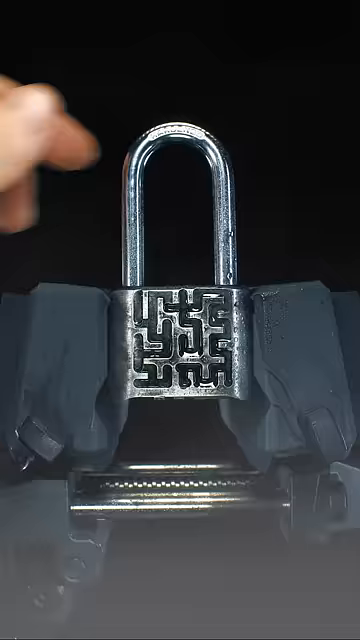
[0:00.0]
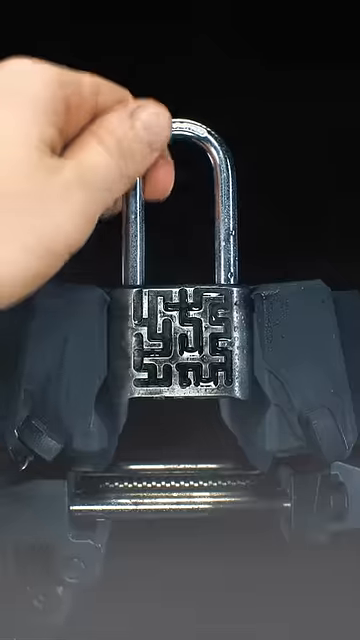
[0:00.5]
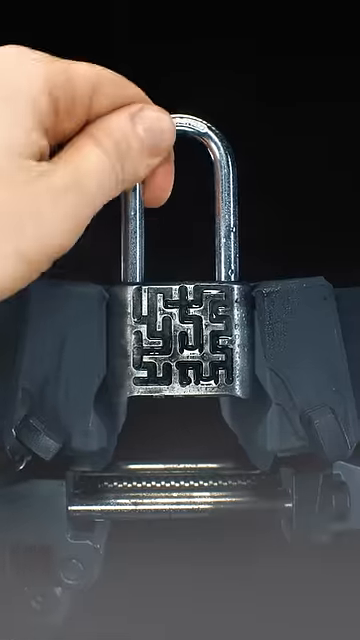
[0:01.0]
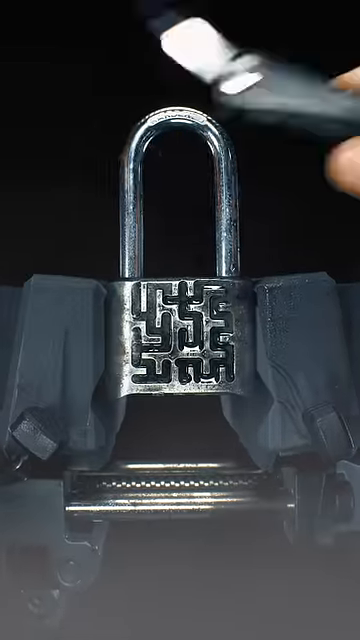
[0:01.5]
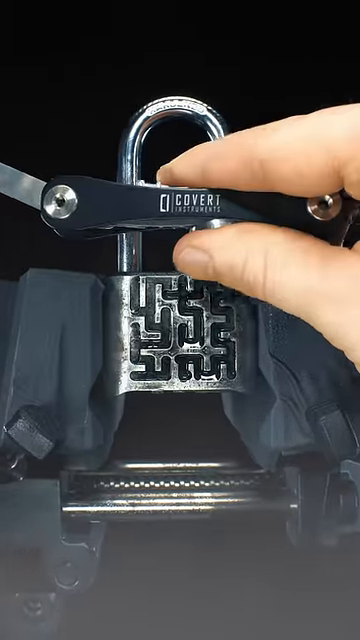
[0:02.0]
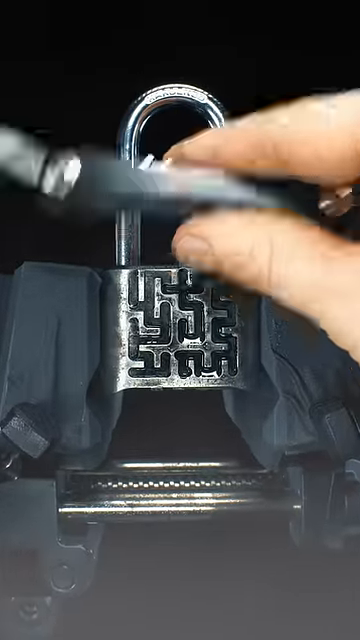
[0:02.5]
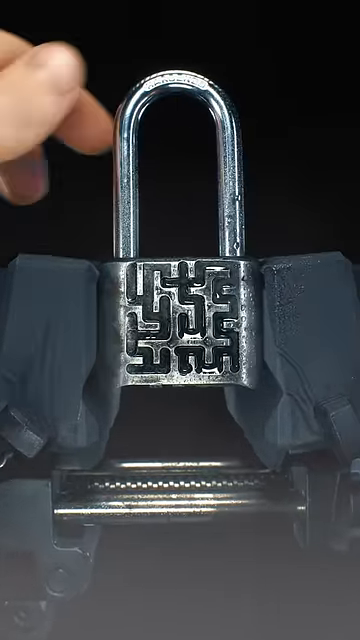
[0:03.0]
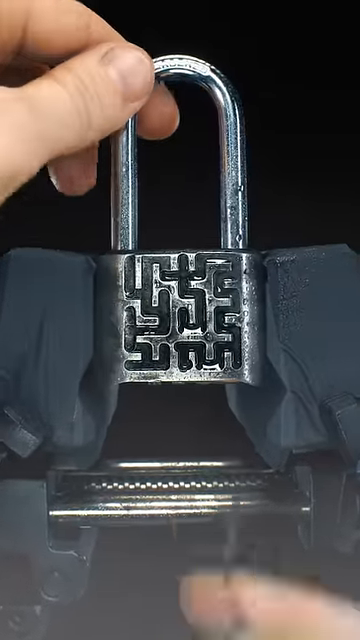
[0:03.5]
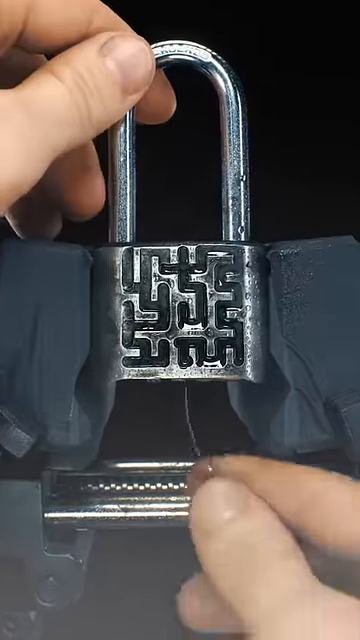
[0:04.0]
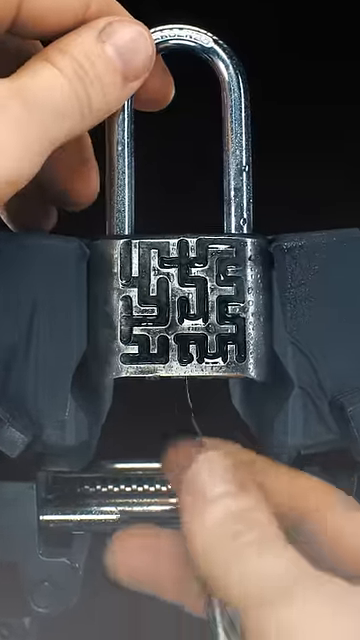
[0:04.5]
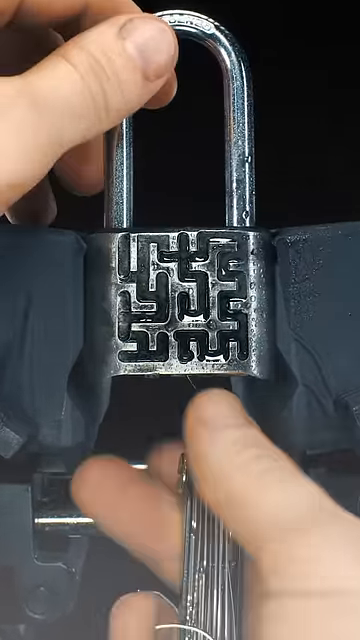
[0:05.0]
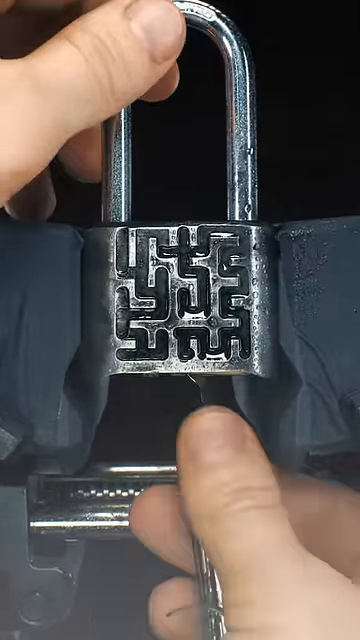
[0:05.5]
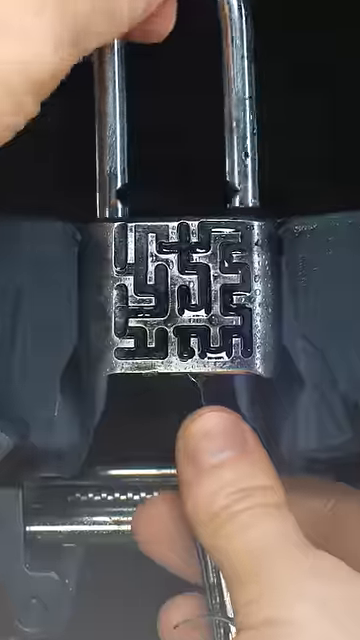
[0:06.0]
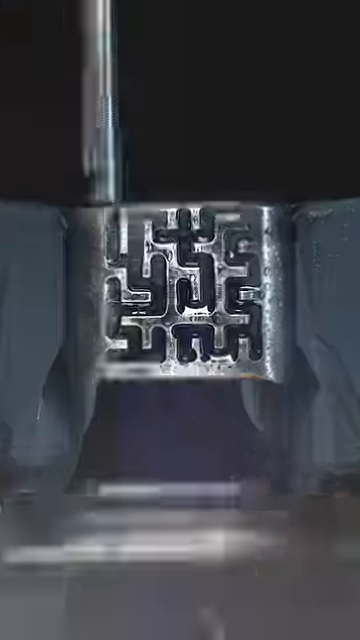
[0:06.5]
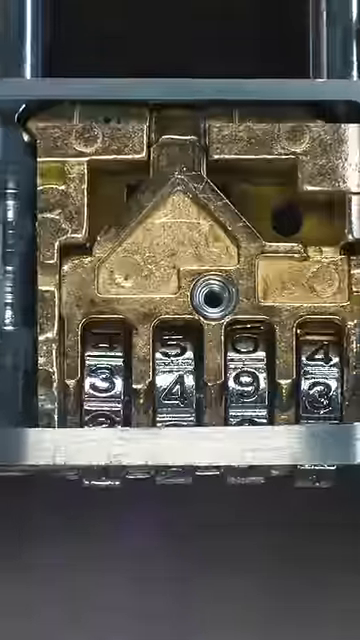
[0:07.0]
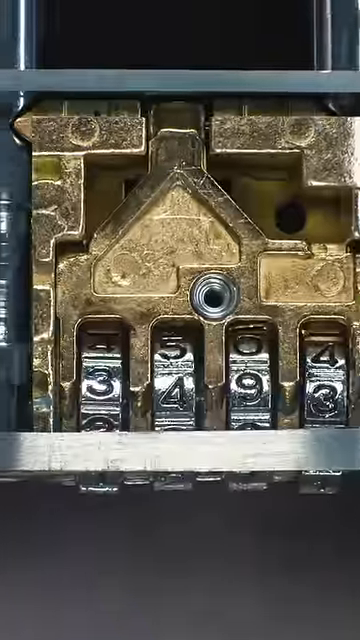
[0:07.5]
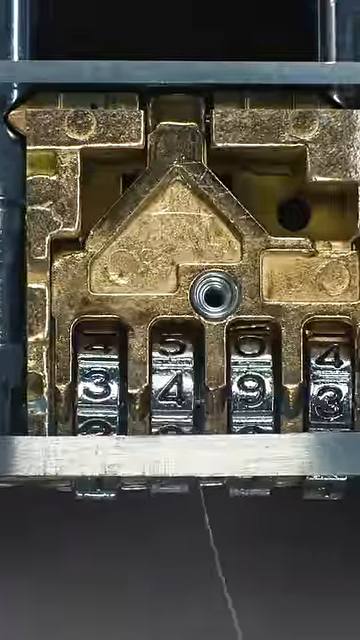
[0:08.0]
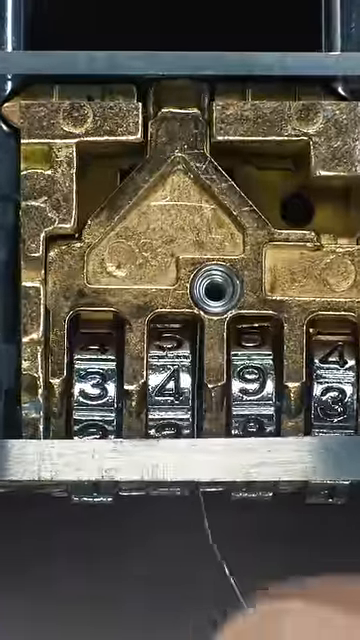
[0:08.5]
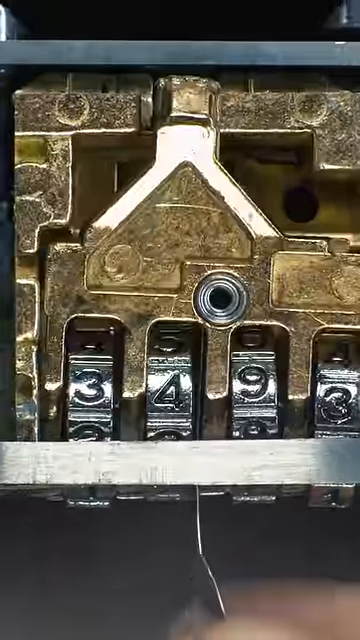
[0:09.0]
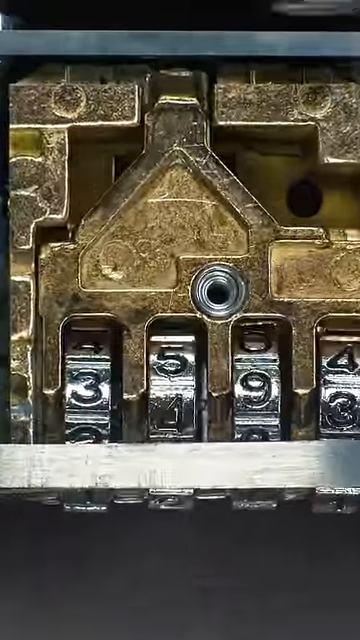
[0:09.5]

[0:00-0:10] A padlock is held in some sort of vice grip, though the vice grip looks strange, as if it is made of black plastic or possibly covered with something. The padlock has a long metal part on top, and underneath that is what looks like a maze, although the maze has no clear exit. A person's hand comes in from off screen on the left and pulls on the padlock a couple of times to show that it is locked. The person then extends in from the right with a tool that has a black handle, thinner in the middle, with a metal part coming off of it; the word "covert" is on it. The person holds the top of the lock with their left hand and puts the metal part of the tool into the bottom of the lock with their right hand. The lock unlocks, and they open it with their left hand. The view then zooms into an inner view of where the person placed the tool, revealing a small compartment with a very small combination lock on it. The person is seen putting the metal tool between one of the dials of the combination lock and pushing upwards.